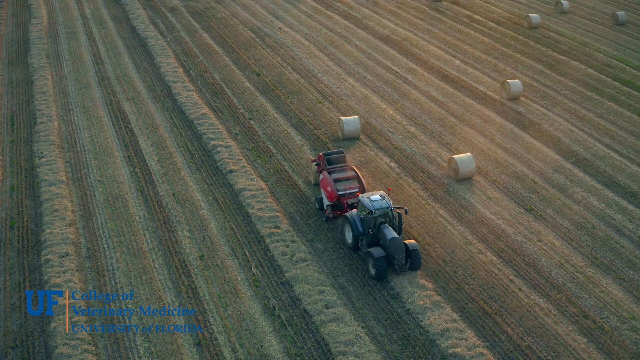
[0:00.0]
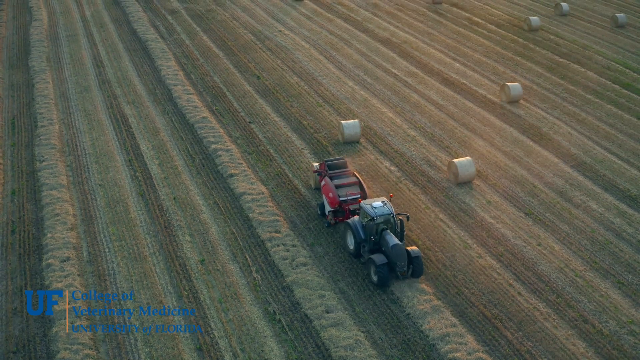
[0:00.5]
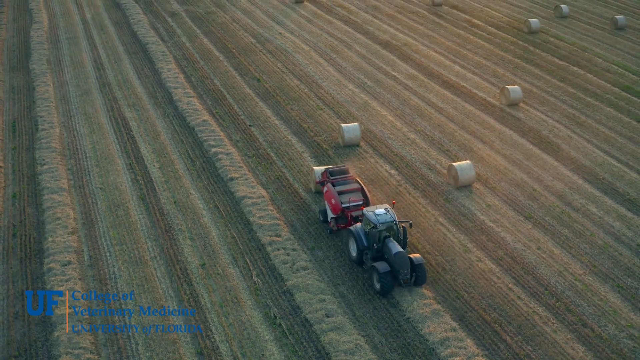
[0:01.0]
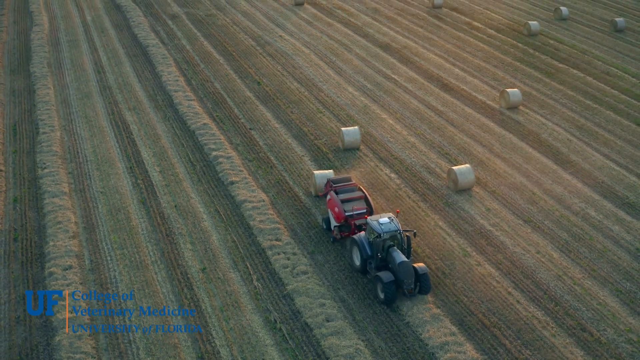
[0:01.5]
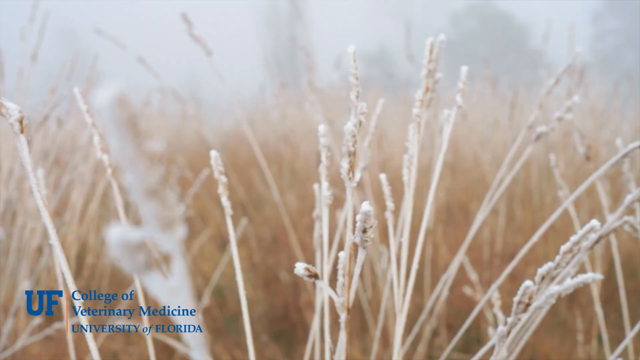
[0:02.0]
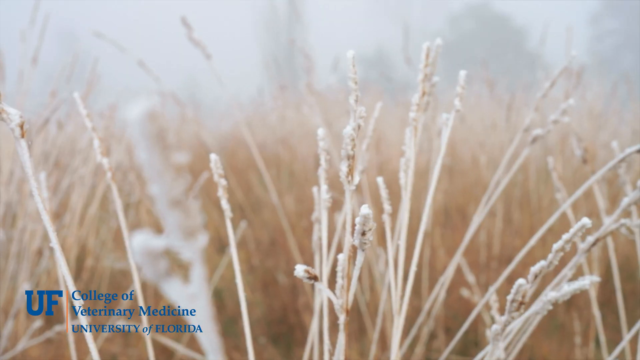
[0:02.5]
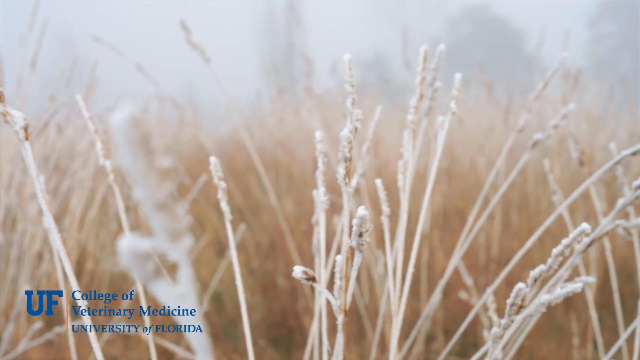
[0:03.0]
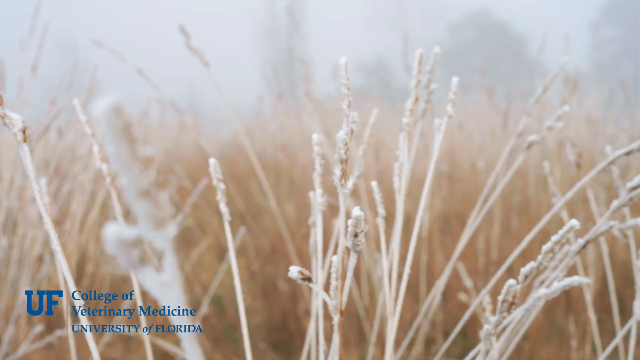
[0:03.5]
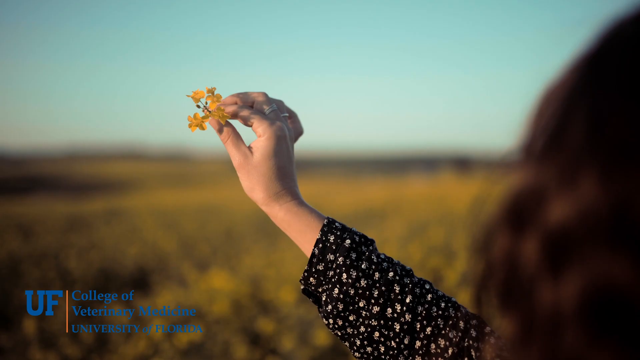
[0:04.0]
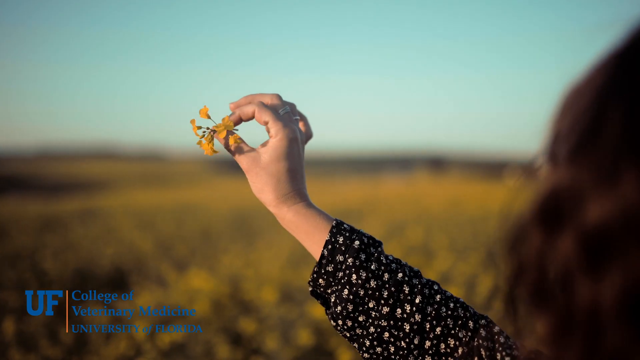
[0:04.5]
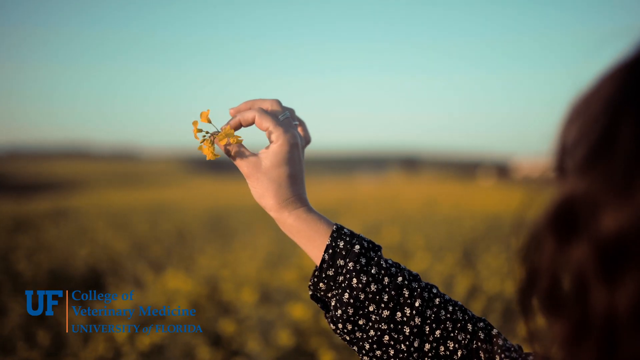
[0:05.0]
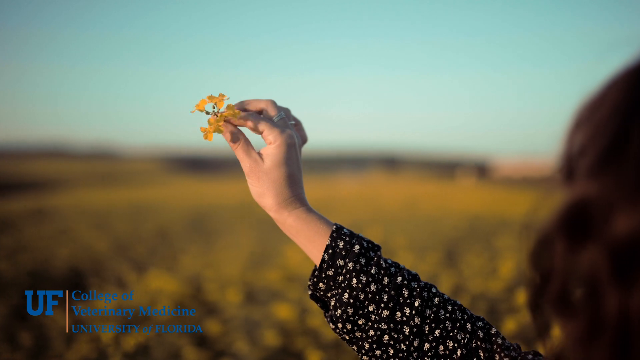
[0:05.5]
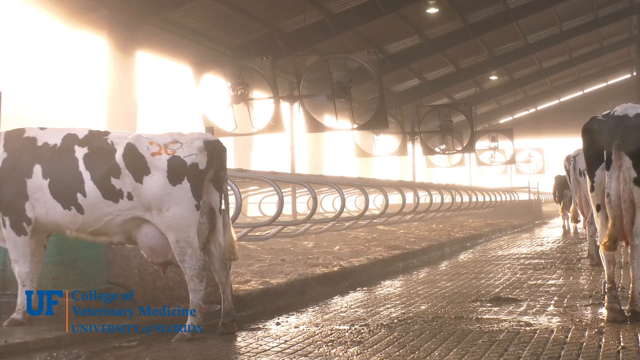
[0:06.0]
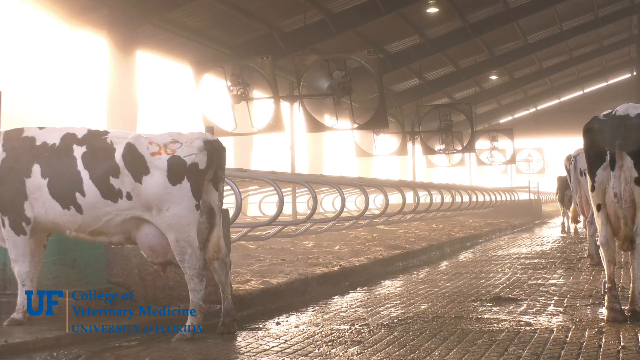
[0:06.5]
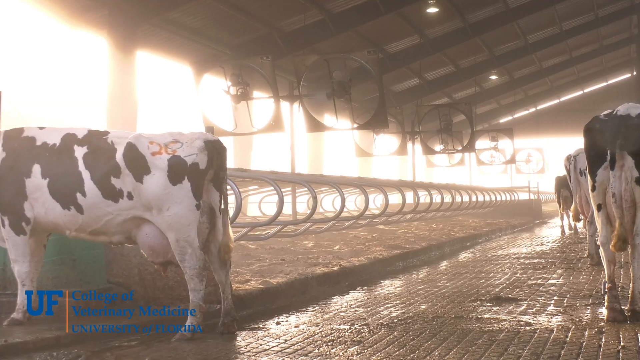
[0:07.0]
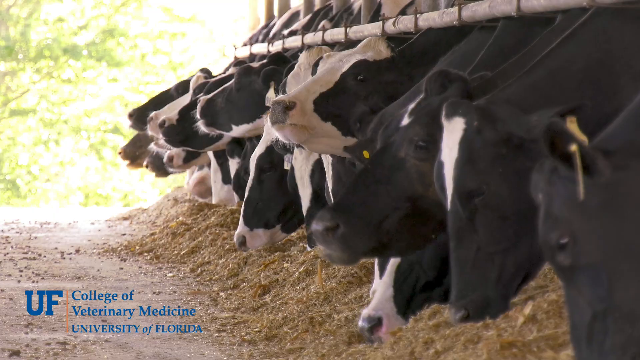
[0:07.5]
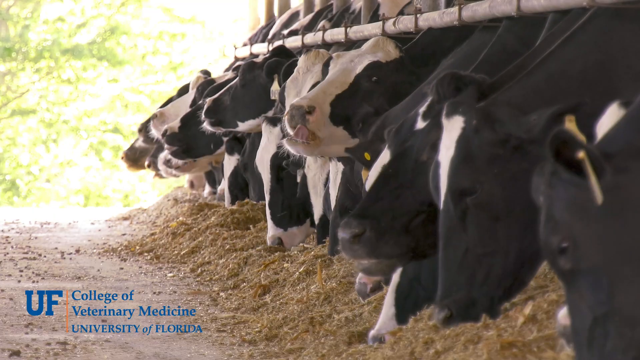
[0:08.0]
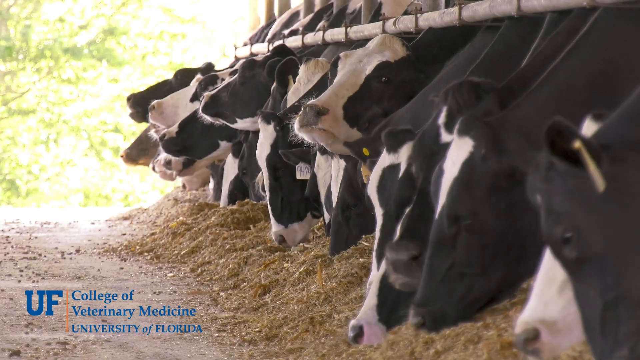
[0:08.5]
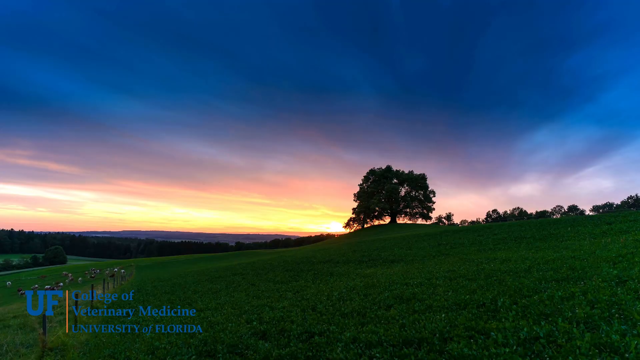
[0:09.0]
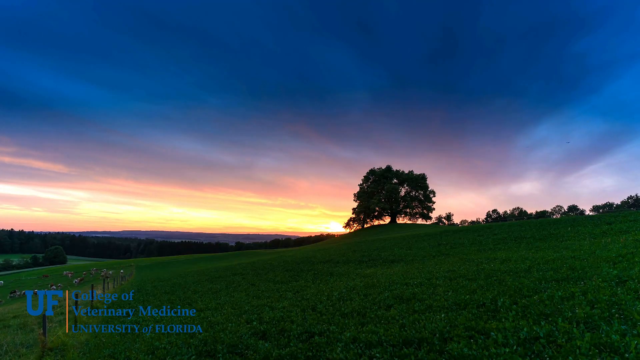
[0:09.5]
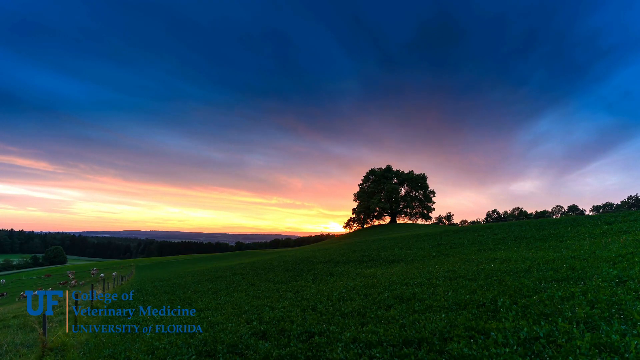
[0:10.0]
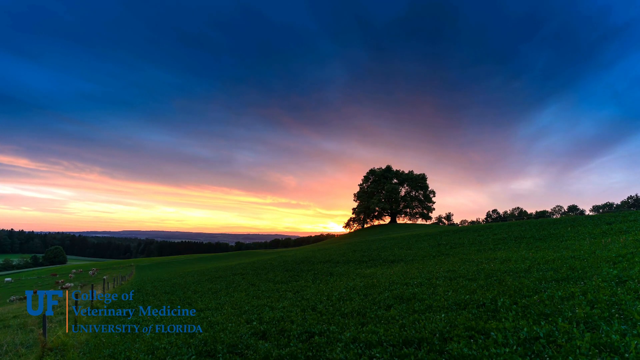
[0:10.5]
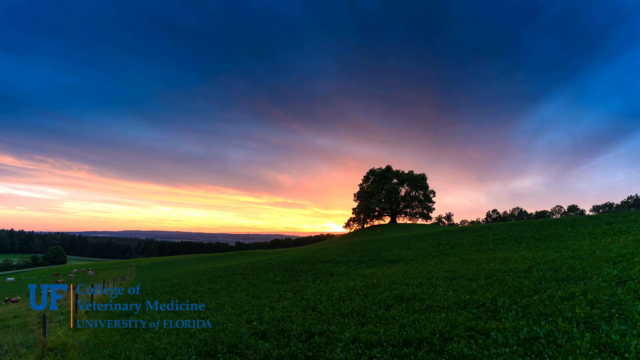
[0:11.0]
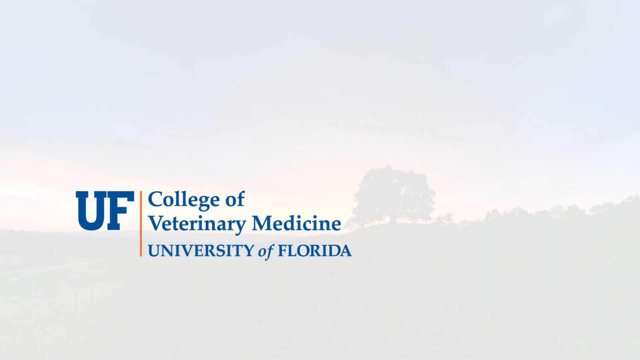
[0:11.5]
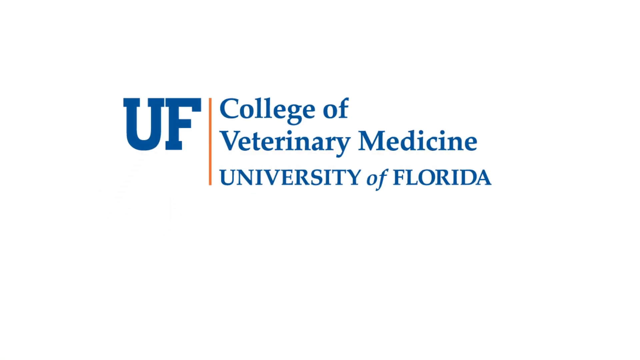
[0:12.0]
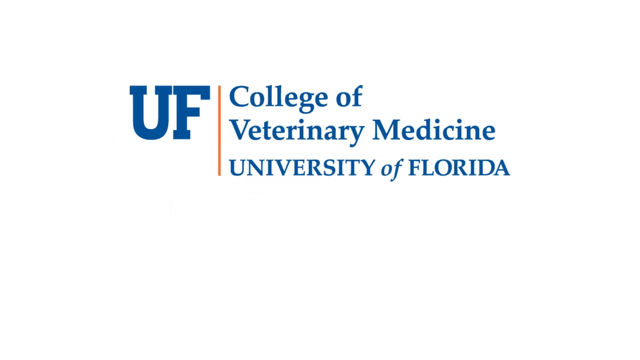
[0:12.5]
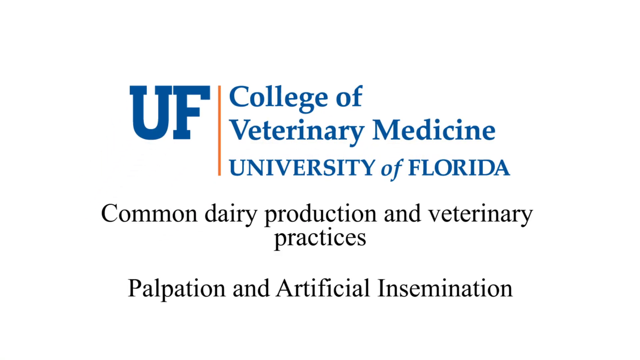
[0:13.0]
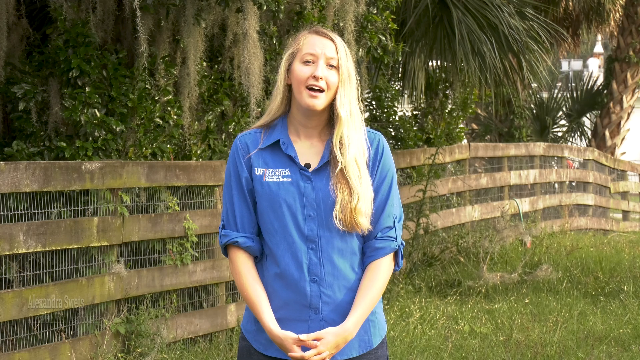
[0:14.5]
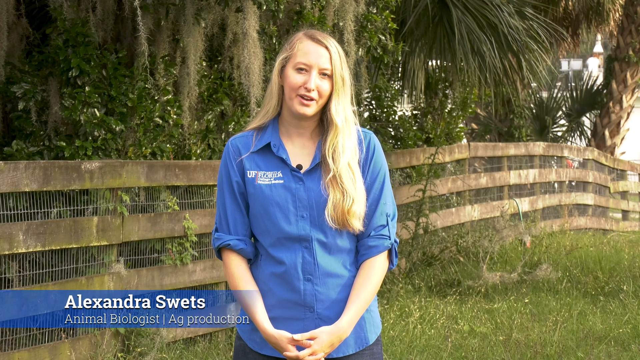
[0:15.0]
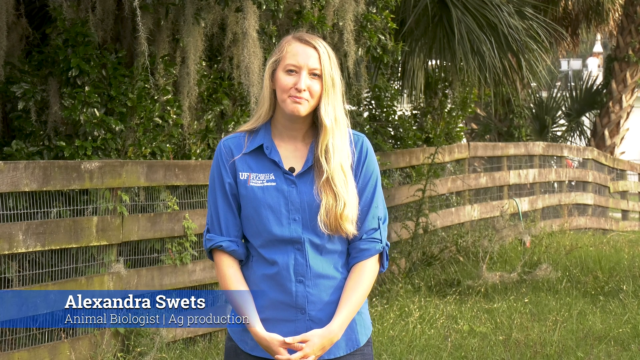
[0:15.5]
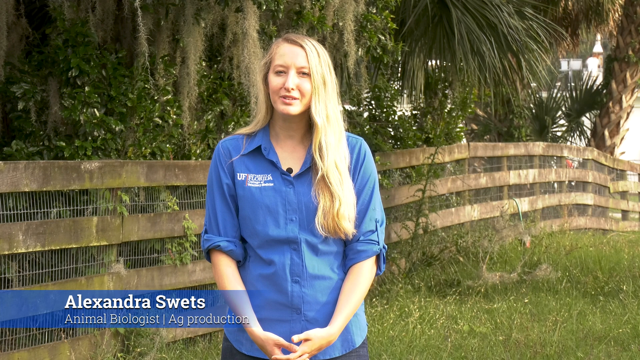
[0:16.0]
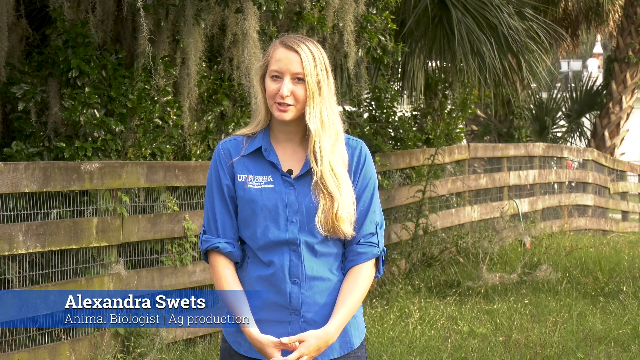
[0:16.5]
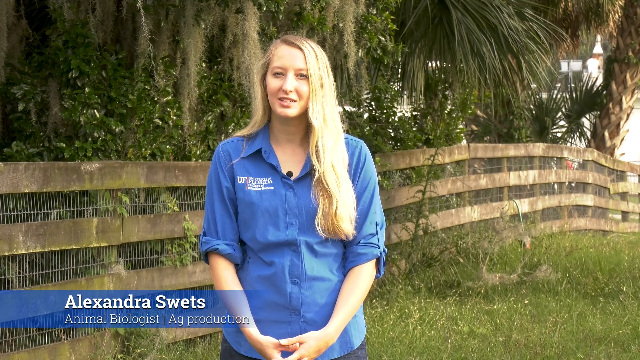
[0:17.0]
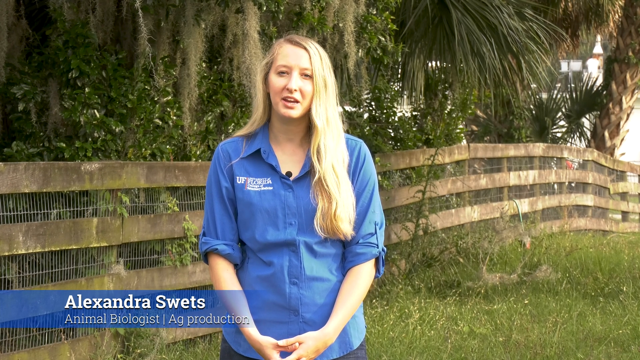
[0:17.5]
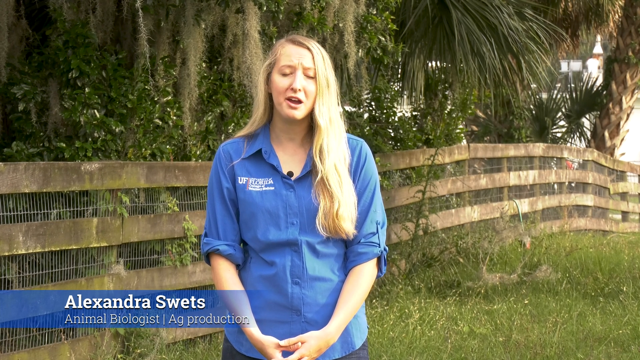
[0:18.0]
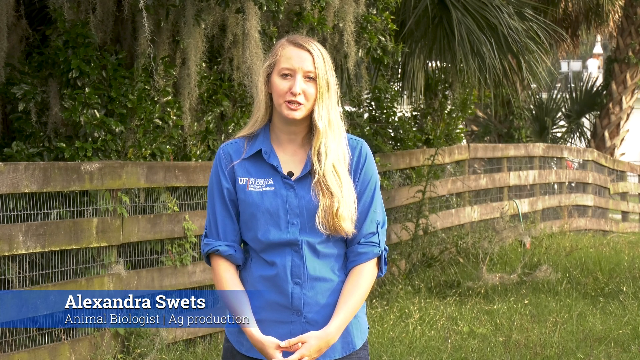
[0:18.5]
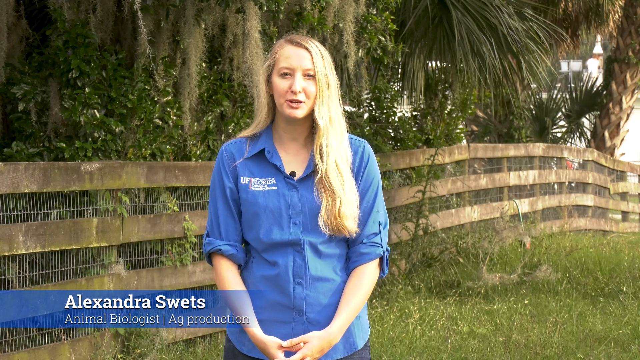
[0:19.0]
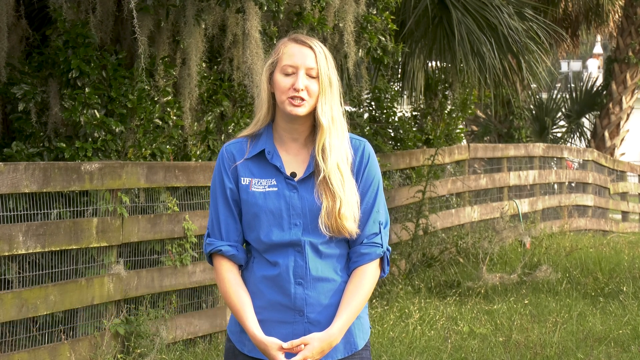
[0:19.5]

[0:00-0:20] Tractors move across a field, mowing something. The video is from the College of Veterinary Medicine at the University of Florida, and it makes clear that it comes from UF. A woman, Alexandra Sweats, an animal biologist, appears; the subject is identified as common dairy production and veterinary practices, palpitation and artificial insemination. She talks in front of a fence in a grassy field area, giving an interview on camera. A woman holding a flower in her hand also appears, along with a group of cows shot candidly; the cows do not do anything notable.